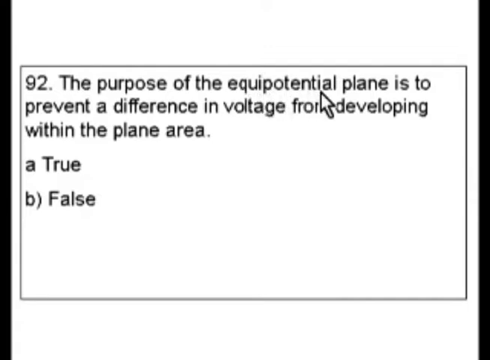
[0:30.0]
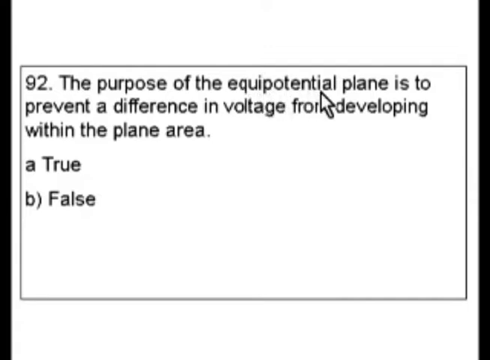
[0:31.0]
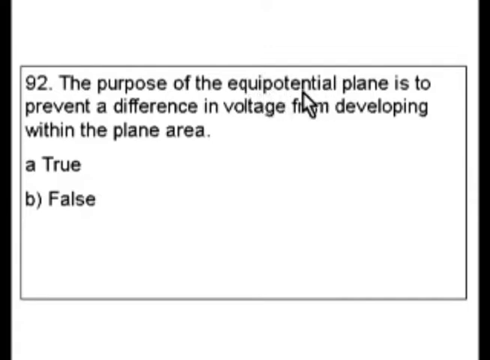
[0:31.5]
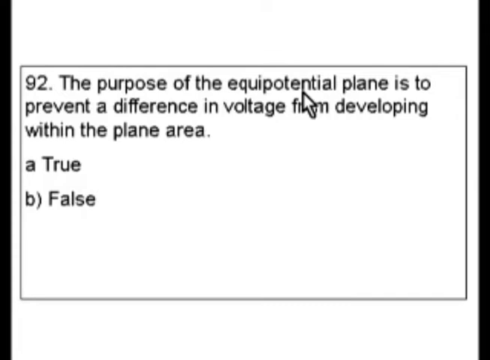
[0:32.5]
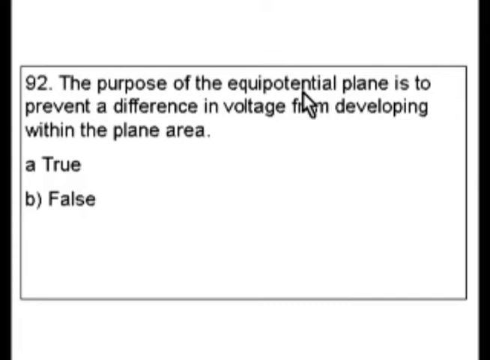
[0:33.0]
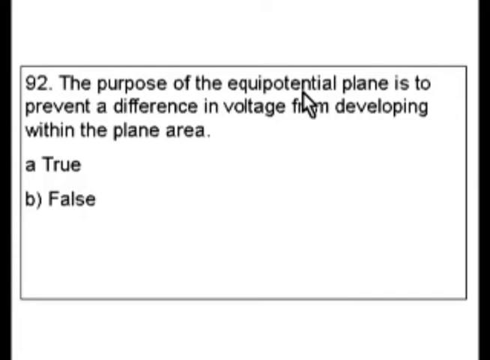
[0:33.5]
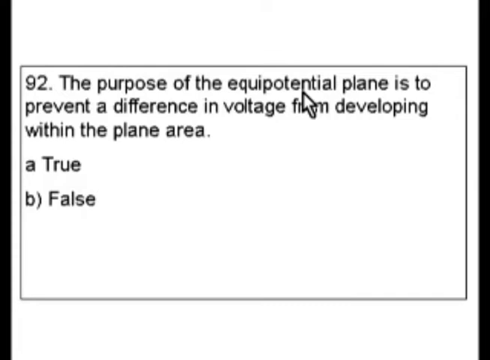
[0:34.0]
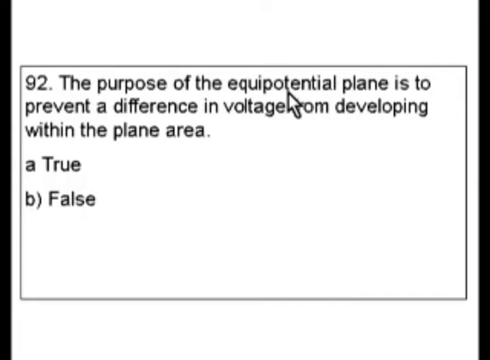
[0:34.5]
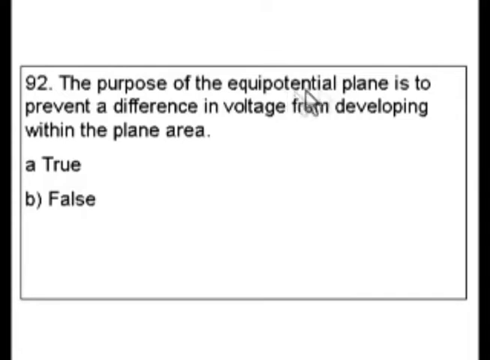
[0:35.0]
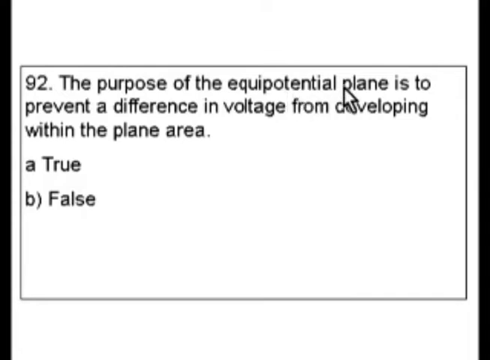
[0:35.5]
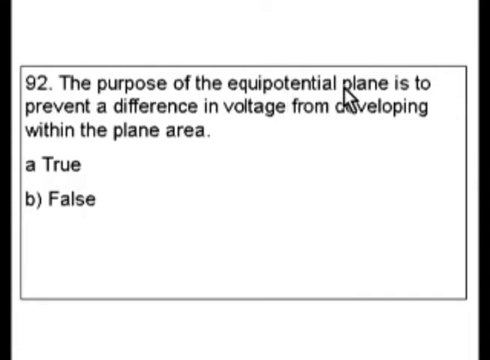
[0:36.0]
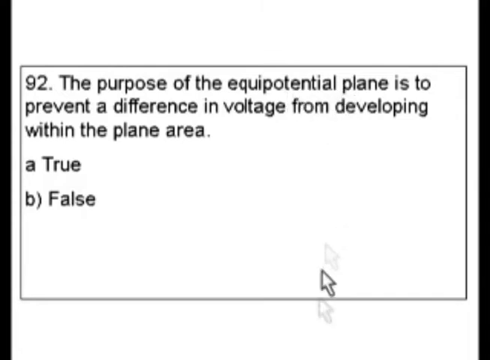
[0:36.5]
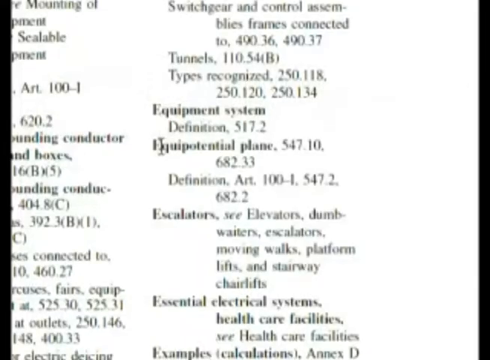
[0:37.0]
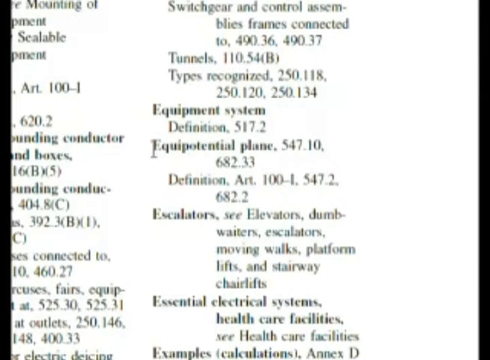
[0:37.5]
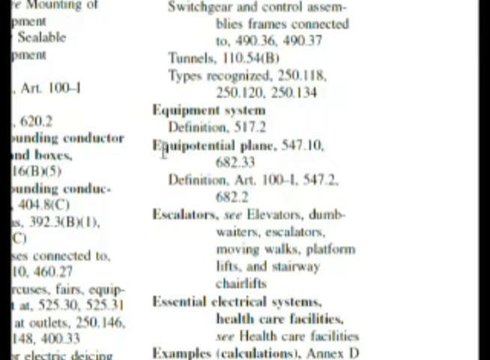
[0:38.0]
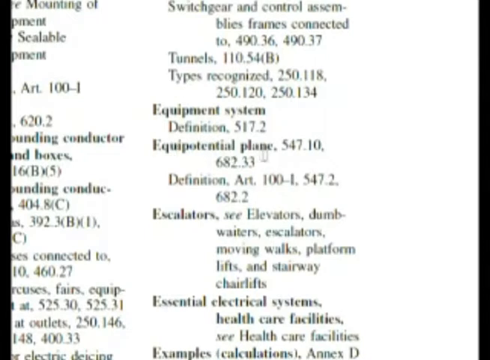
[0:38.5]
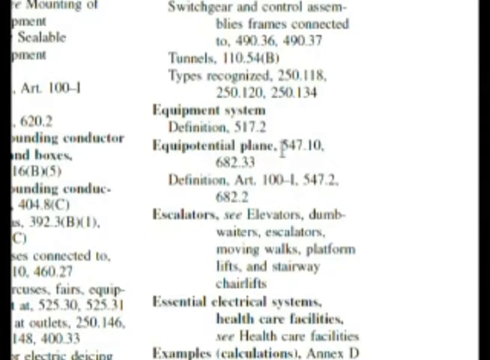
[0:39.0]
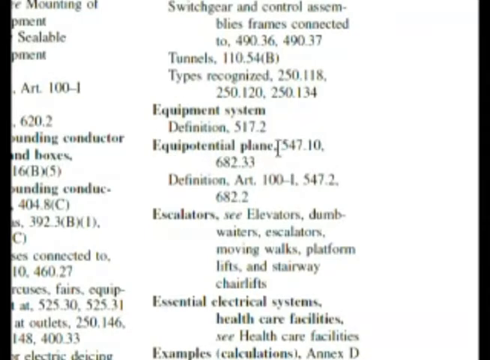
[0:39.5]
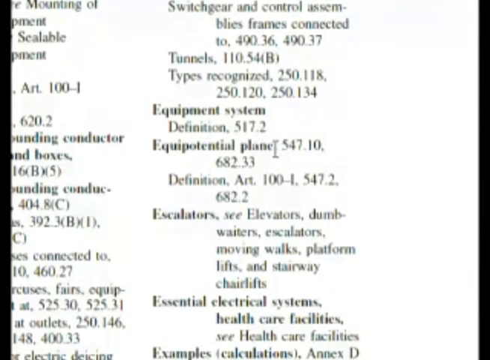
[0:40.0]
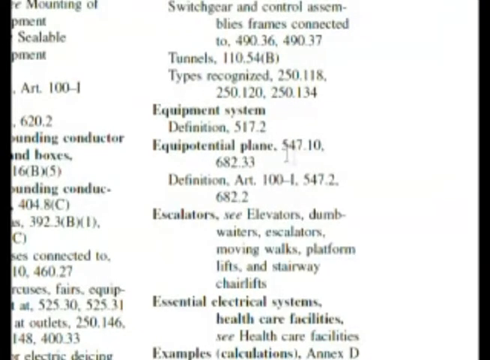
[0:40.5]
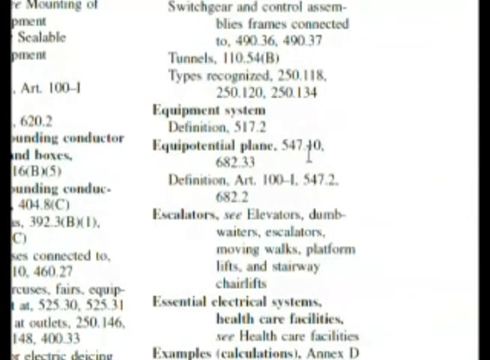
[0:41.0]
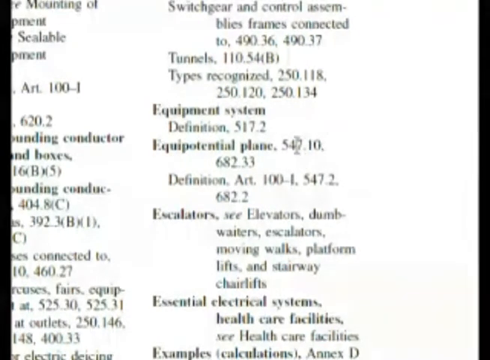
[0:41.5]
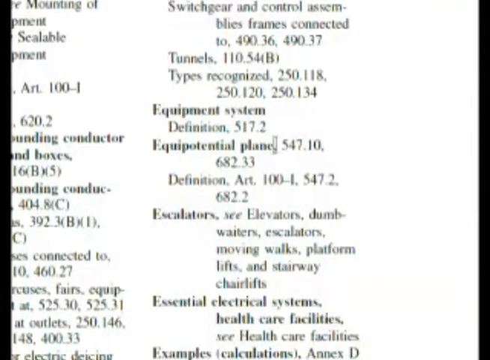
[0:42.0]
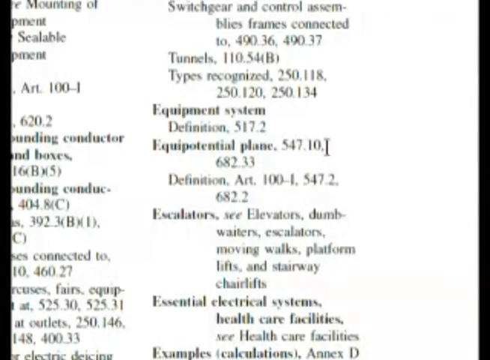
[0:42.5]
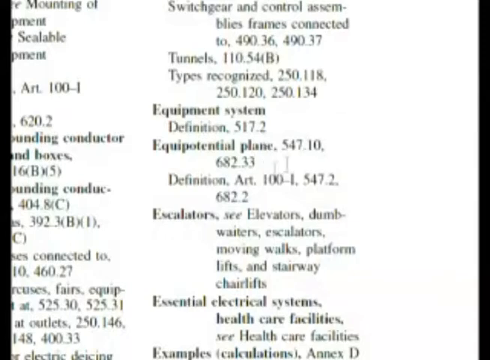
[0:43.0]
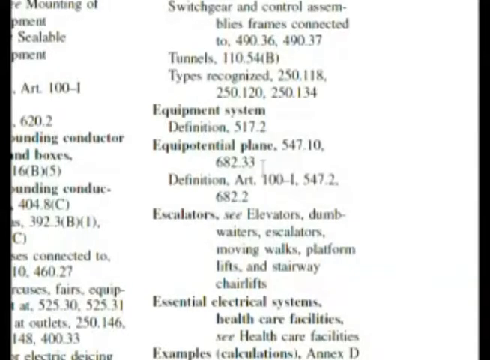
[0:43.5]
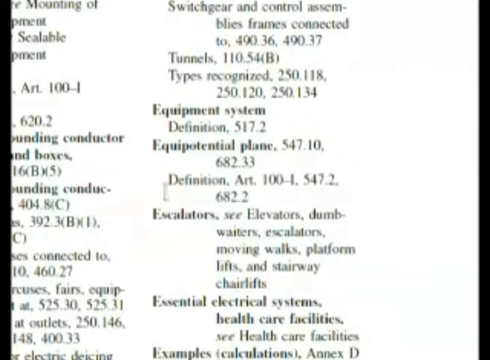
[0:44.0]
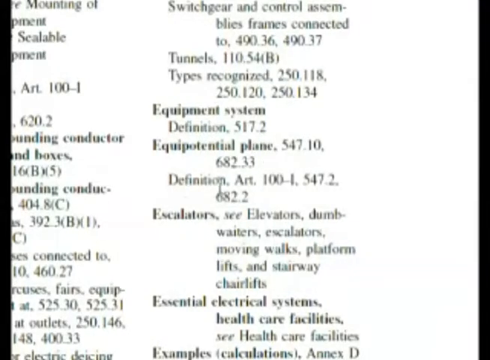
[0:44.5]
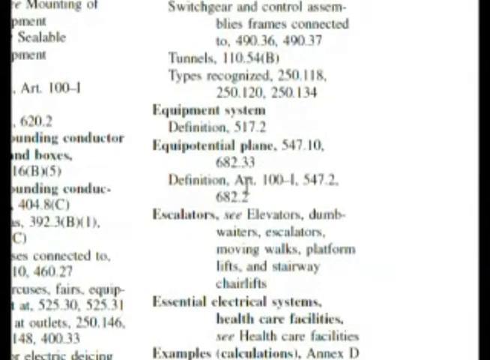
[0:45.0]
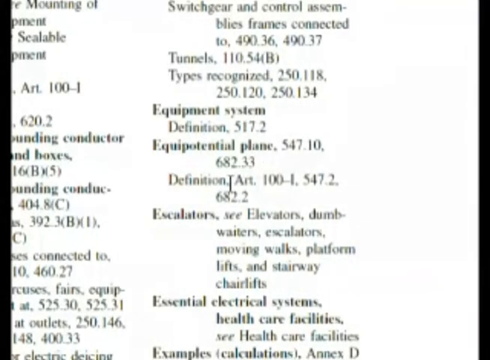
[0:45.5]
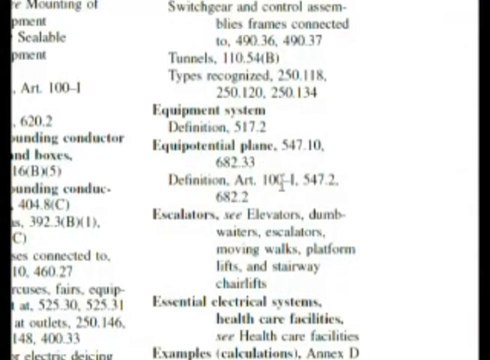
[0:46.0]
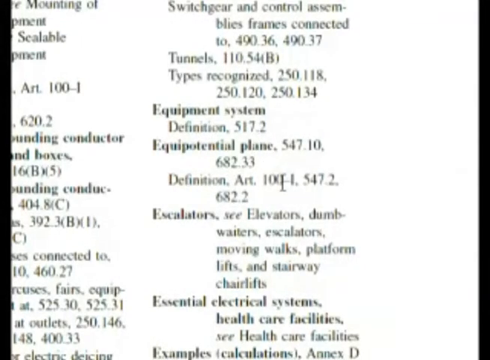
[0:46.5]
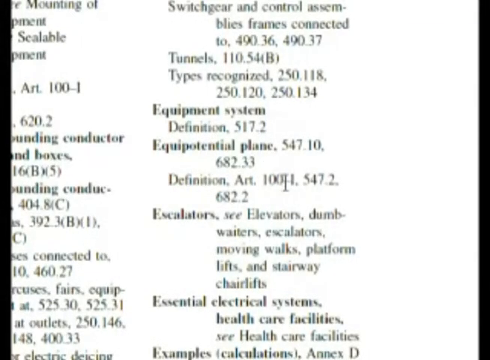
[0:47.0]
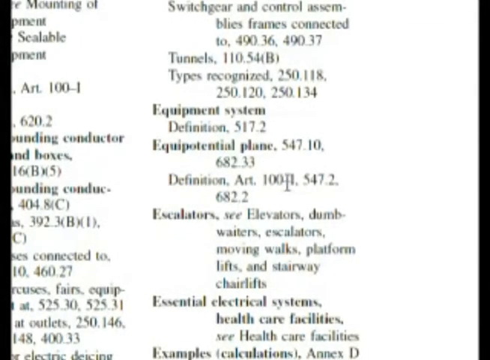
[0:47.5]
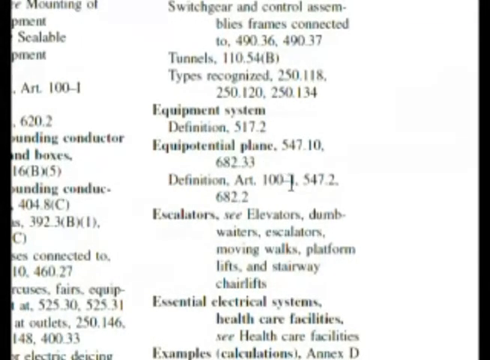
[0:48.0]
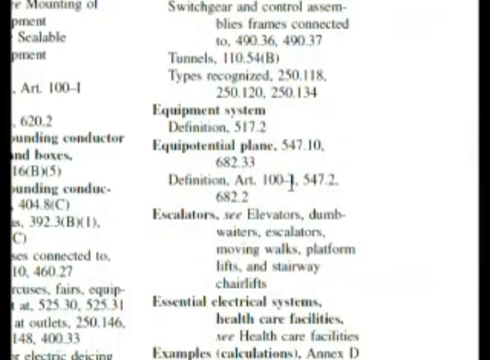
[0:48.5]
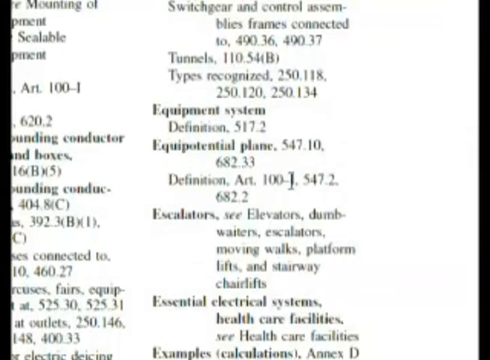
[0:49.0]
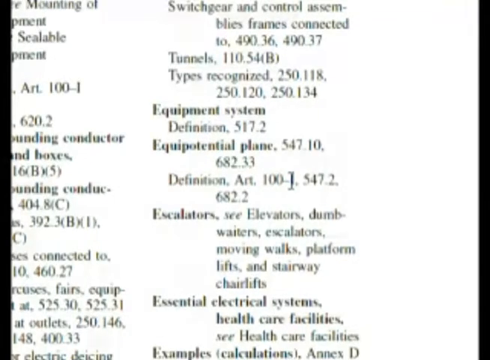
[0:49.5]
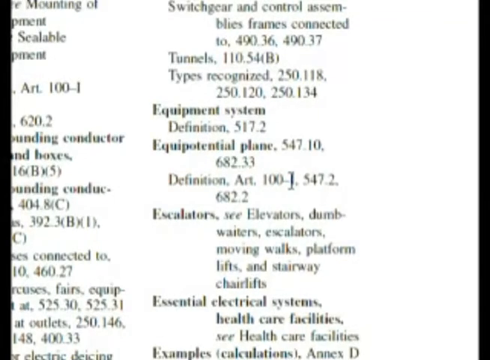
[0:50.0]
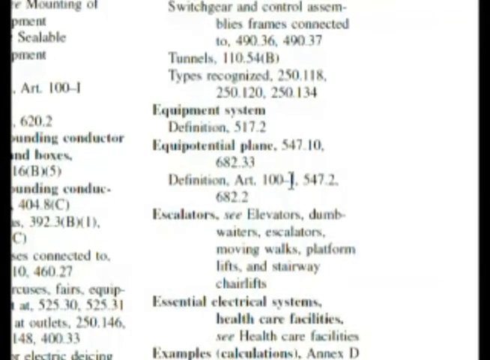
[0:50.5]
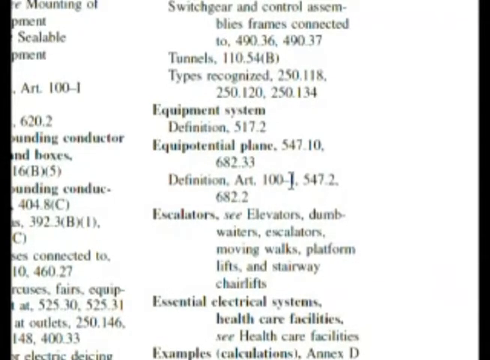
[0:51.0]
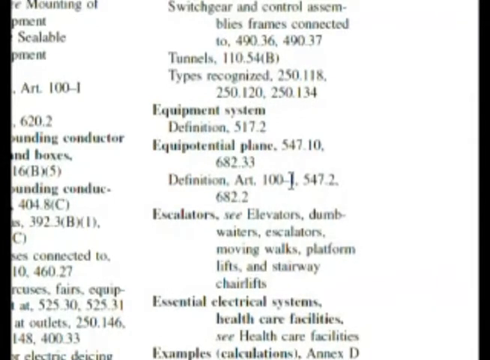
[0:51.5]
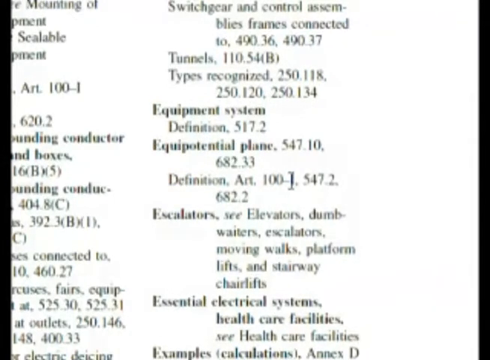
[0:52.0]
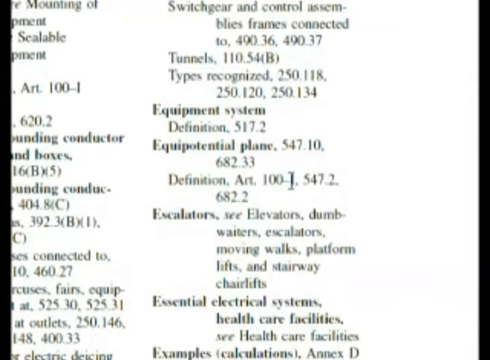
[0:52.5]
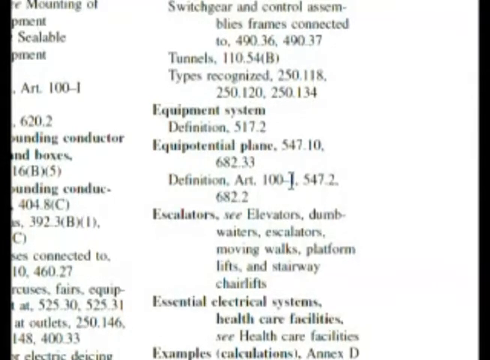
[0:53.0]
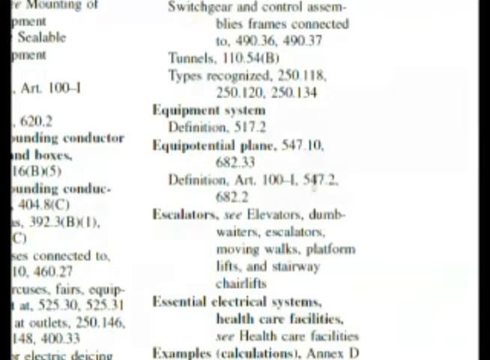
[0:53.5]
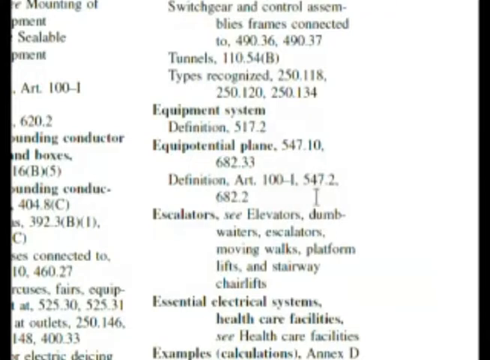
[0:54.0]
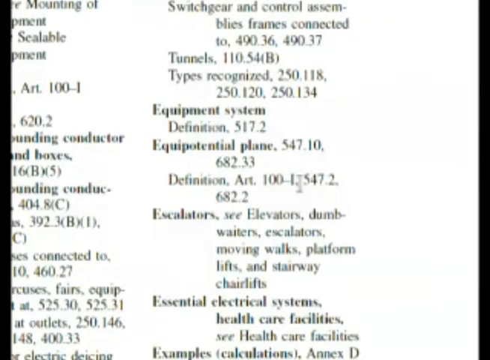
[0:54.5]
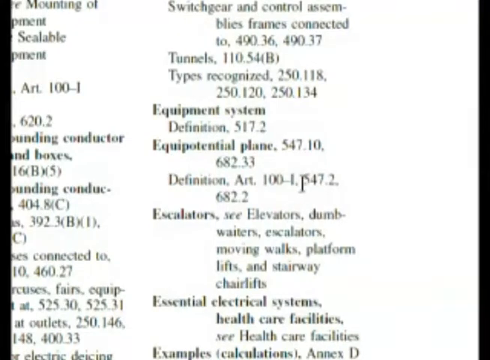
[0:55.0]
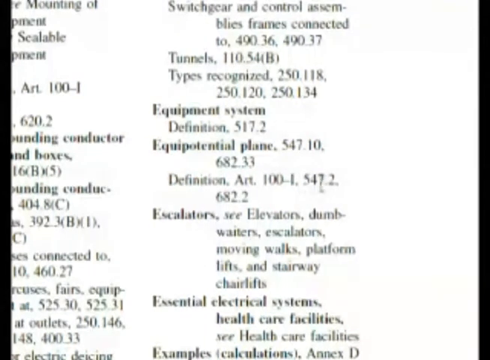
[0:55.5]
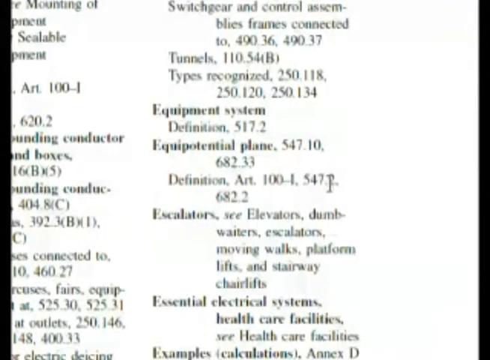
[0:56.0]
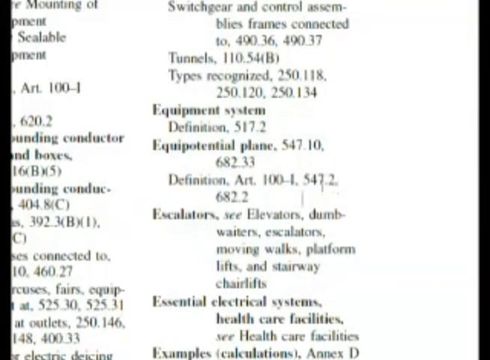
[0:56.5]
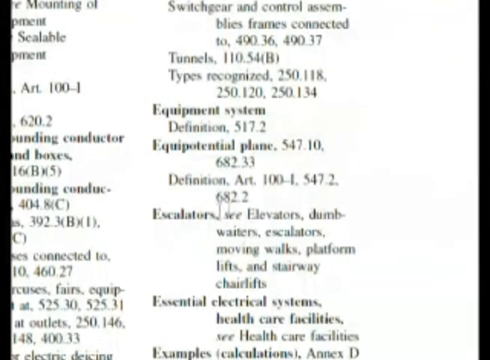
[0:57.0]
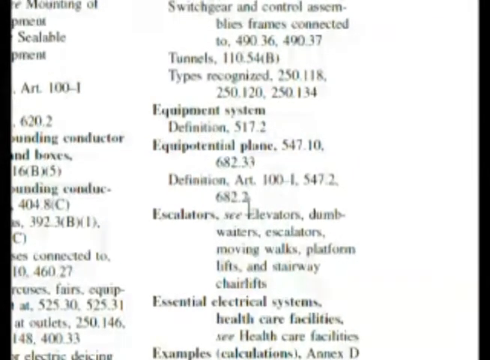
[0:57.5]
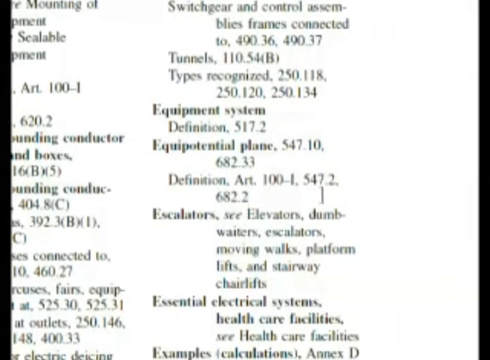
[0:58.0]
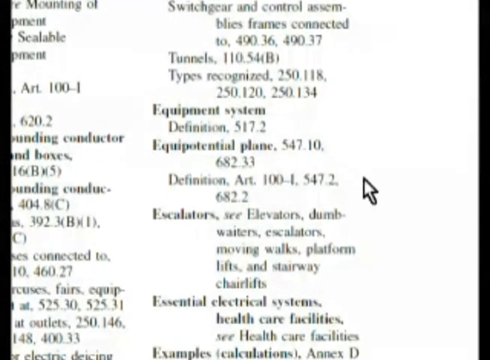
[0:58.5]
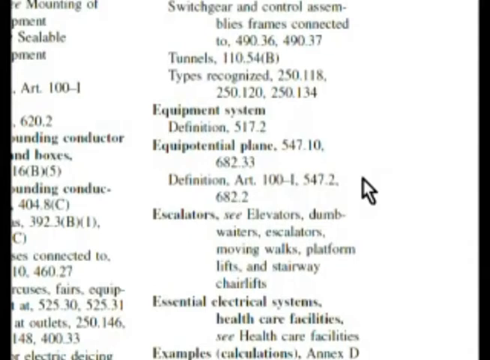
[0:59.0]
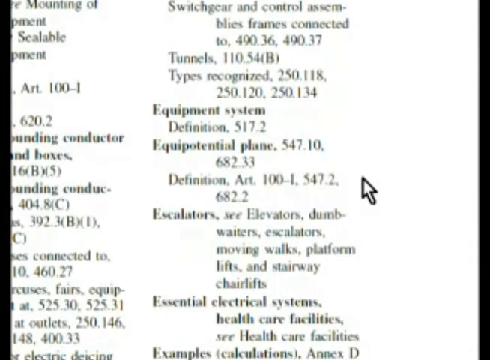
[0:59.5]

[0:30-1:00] The same screen remains, with the cursor pointing to the word "equipotential." The view then goes off screen without showing what was clicked, and a glossary of words appears. The glossary is looked through and the entry "equipotential plane" is found, showing what appear to be references to page numbers or codes. The cursor moves around the screen somewhat aimlessly.